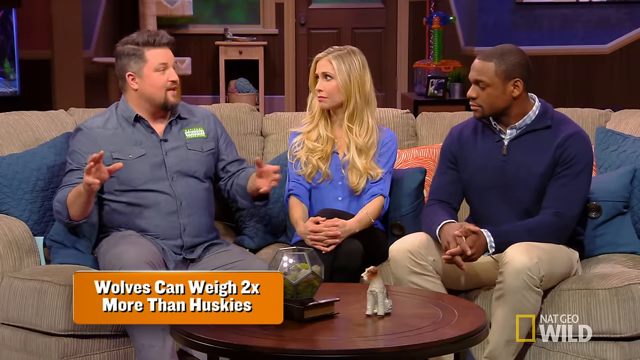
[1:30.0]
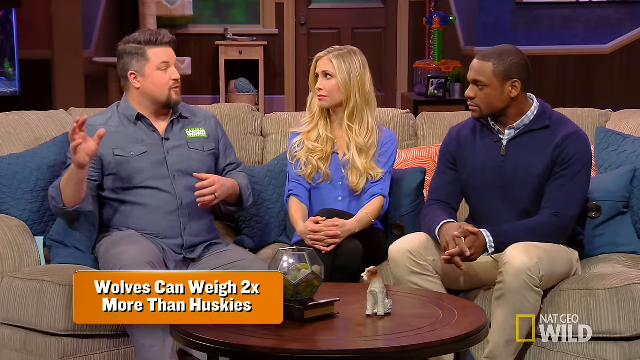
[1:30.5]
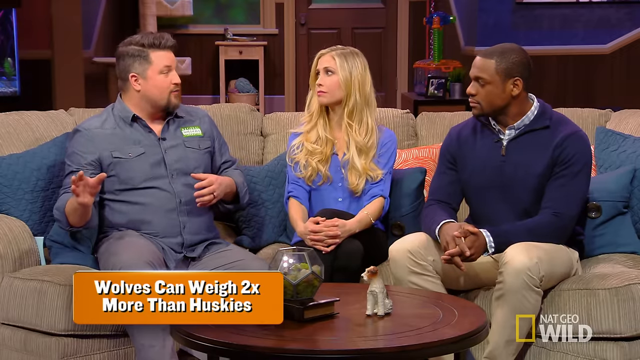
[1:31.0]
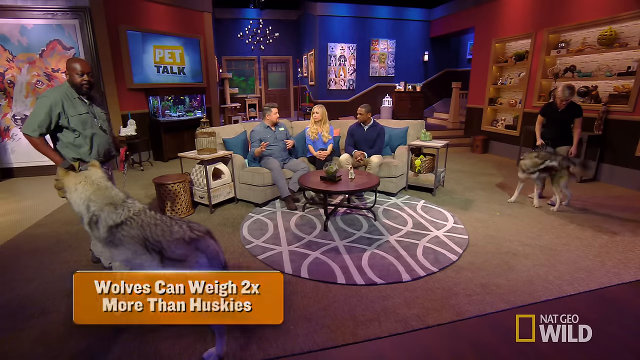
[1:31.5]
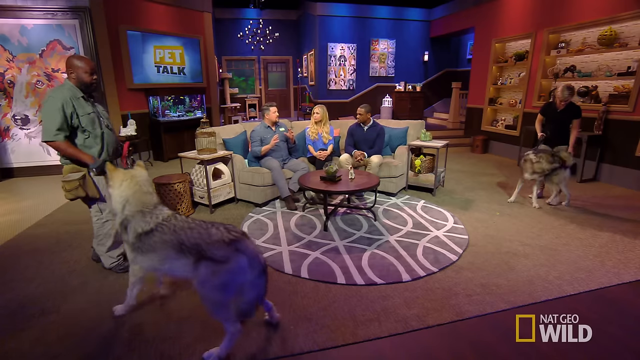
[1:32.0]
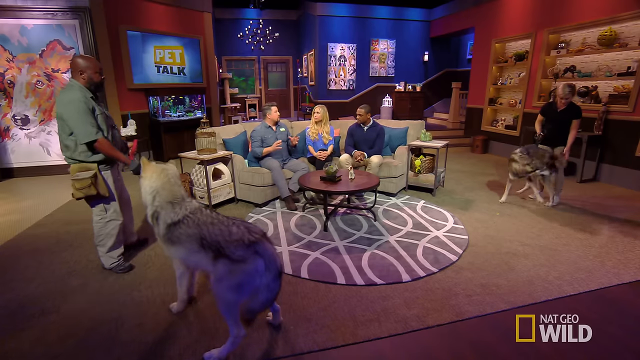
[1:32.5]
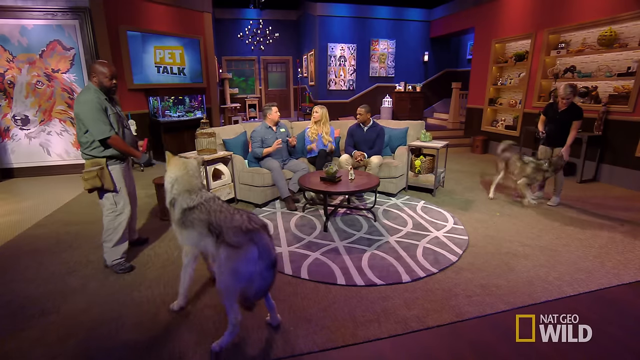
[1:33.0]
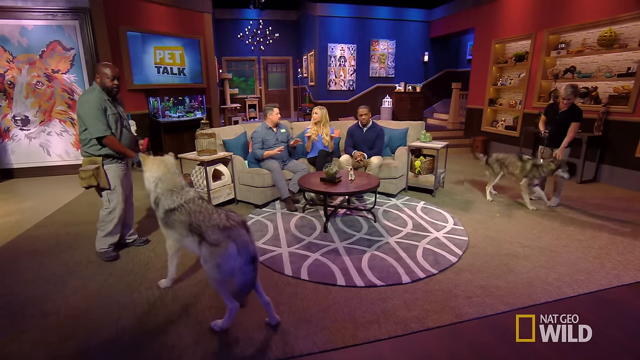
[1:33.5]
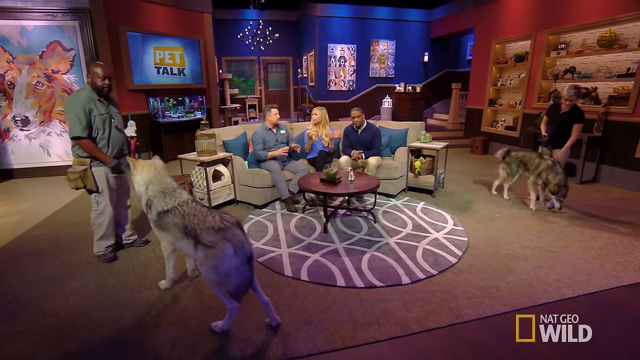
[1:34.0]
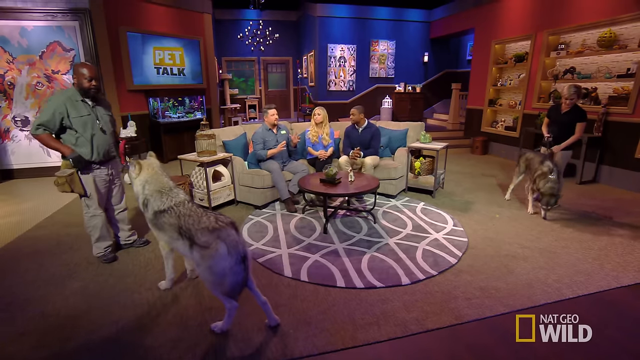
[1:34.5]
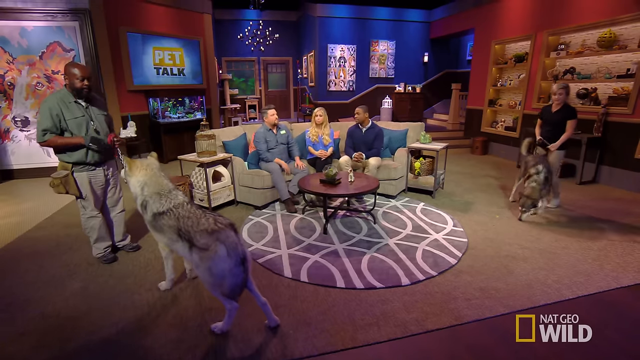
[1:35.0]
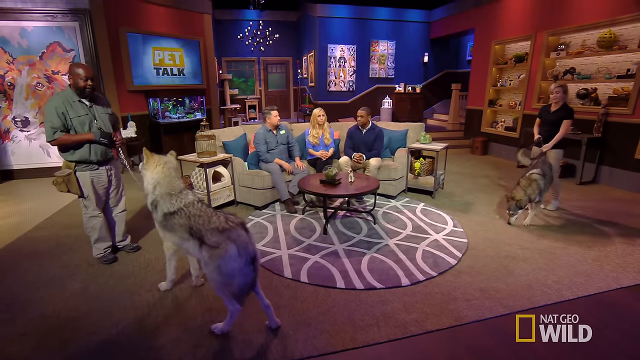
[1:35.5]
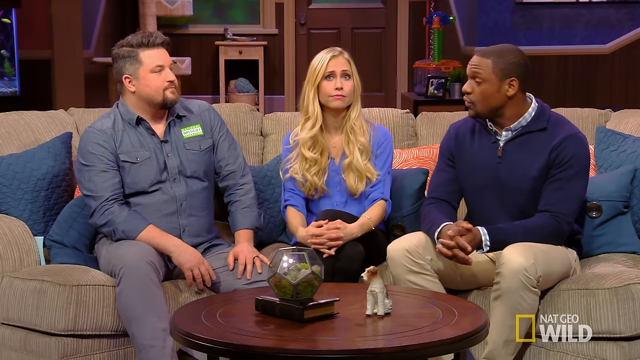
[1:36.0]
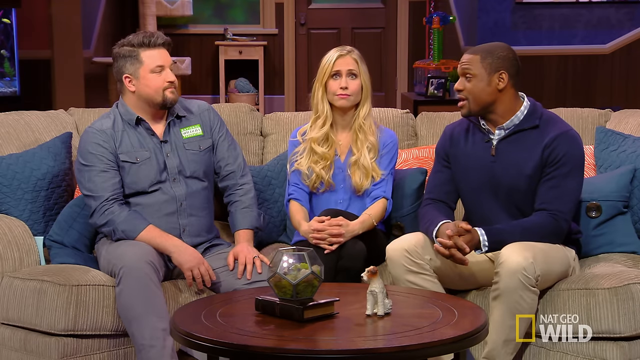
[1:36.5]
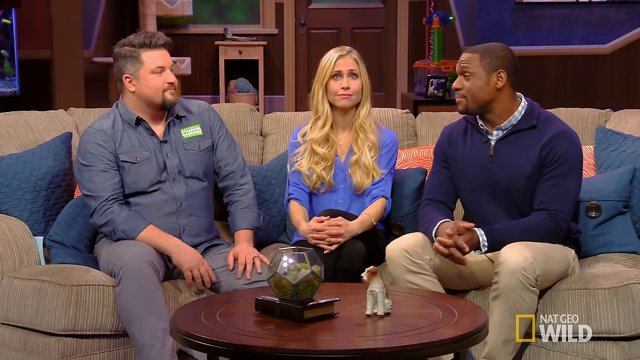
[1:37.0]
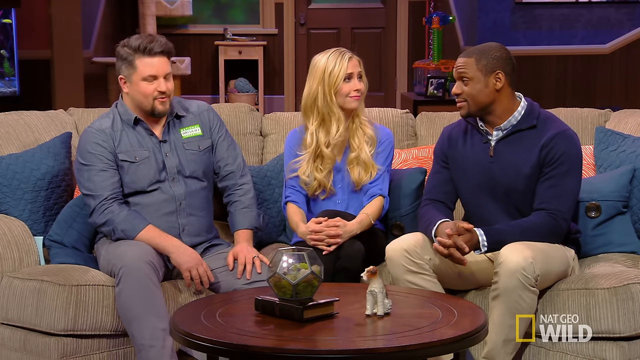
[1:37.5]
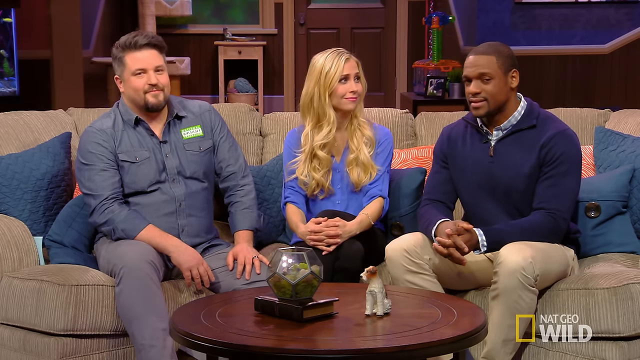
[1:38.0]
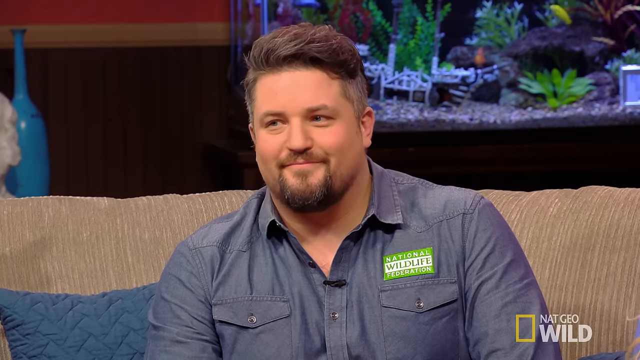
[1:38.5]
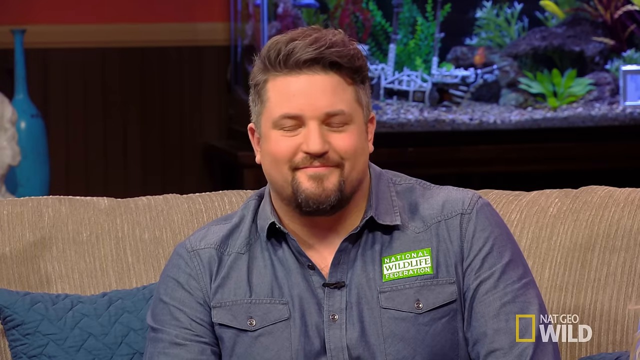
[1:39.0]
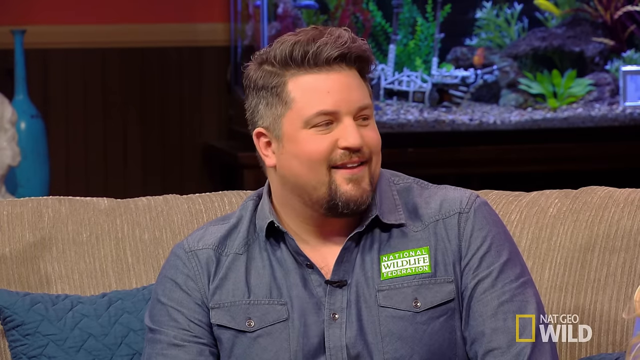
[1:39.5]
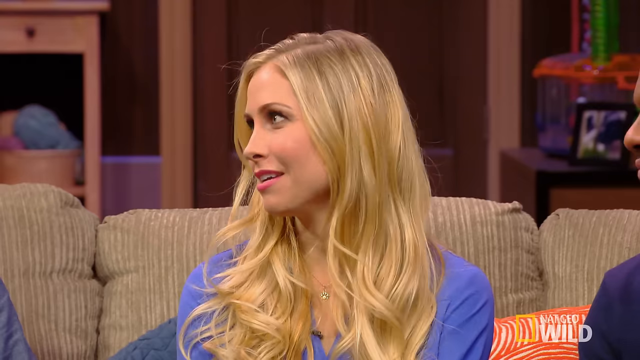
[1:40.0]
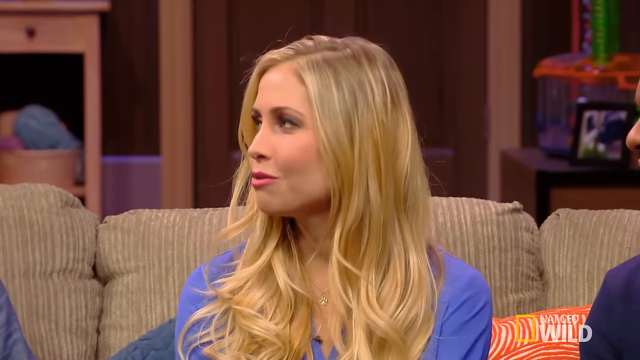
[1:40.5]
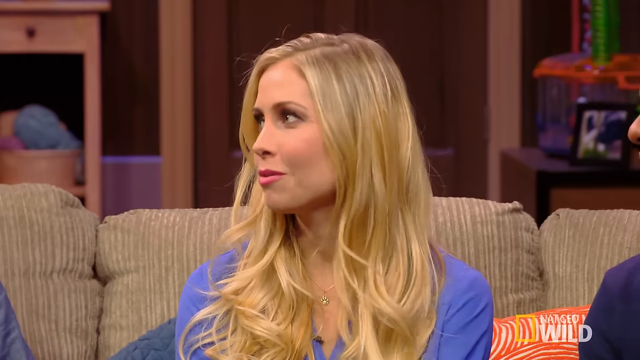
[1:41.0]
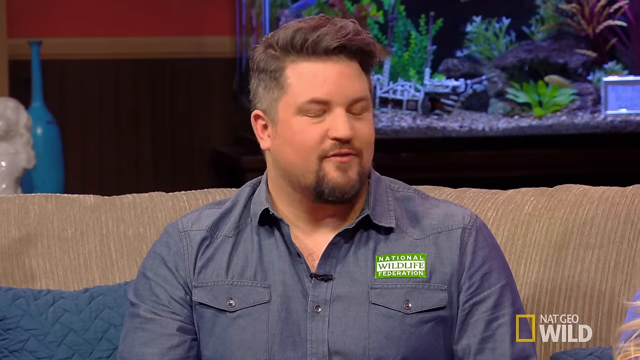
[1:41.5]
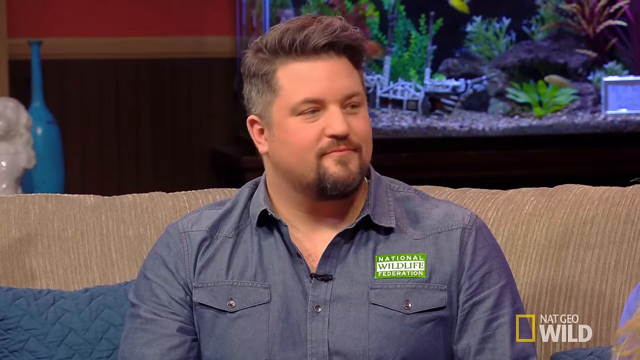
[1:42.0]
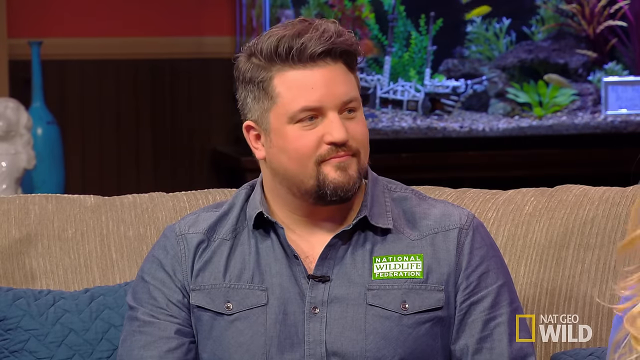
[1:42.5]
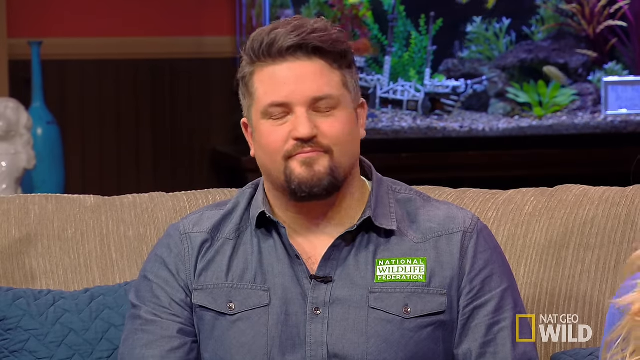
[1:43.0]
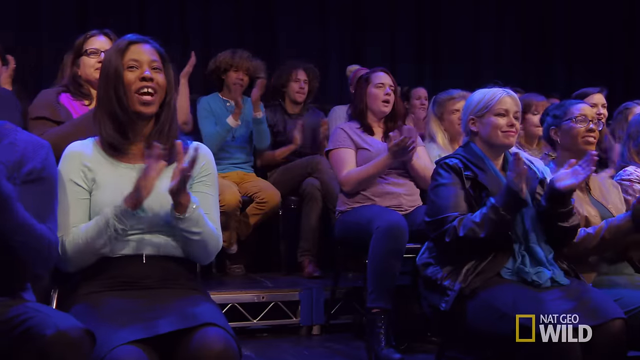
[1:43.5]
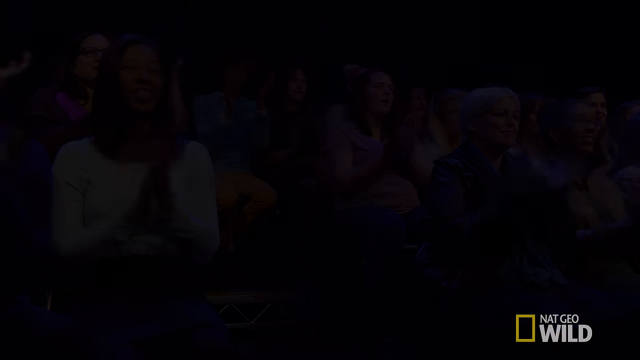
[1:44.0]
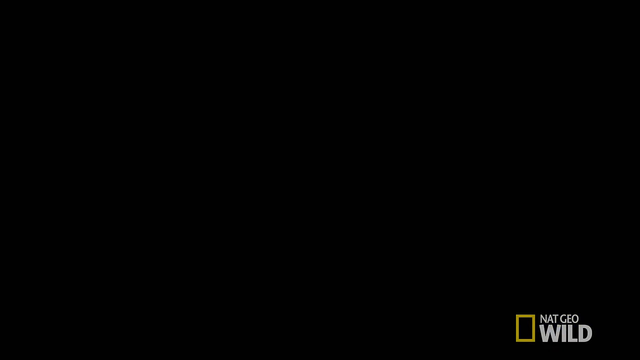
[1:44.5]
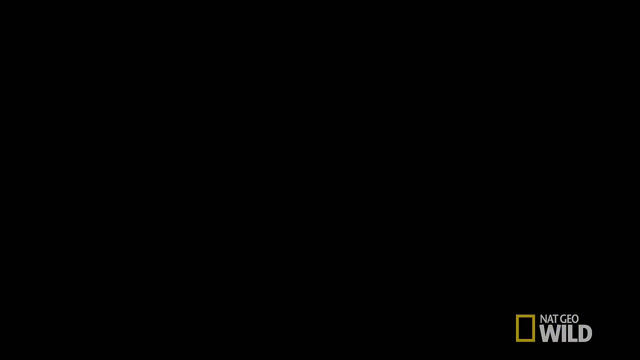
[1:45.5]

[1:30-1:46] Text on the screen reads "wolves weigh times two more than dogs". The man seems to be giving a summary of his points, and the white woman and the black man are seen talking, with their lips moving. The screen goes darker for a while, then the camera moves toward the crowd, showing a couple of people seated there who are clapping and smiling.